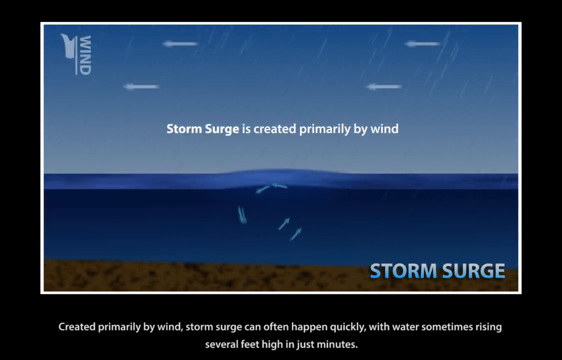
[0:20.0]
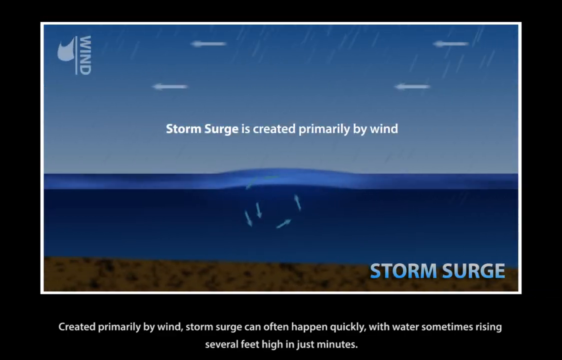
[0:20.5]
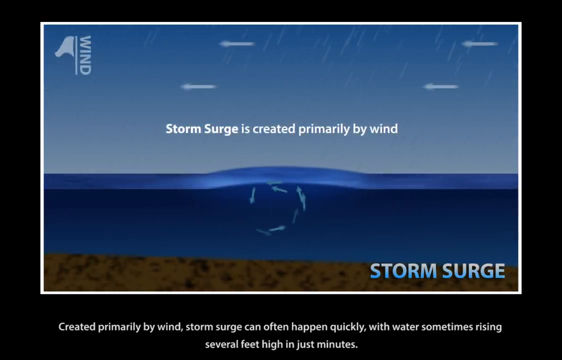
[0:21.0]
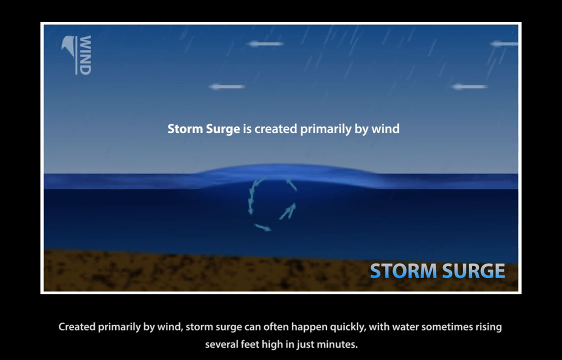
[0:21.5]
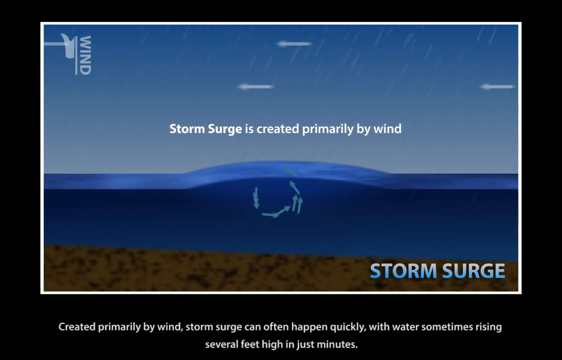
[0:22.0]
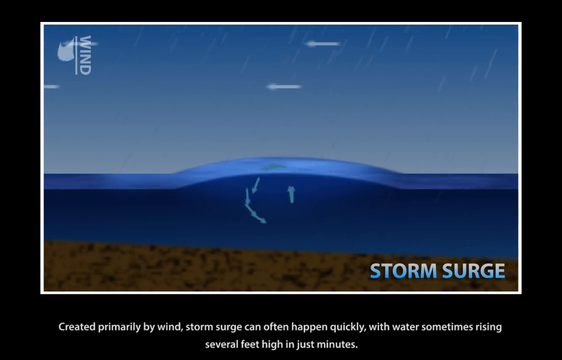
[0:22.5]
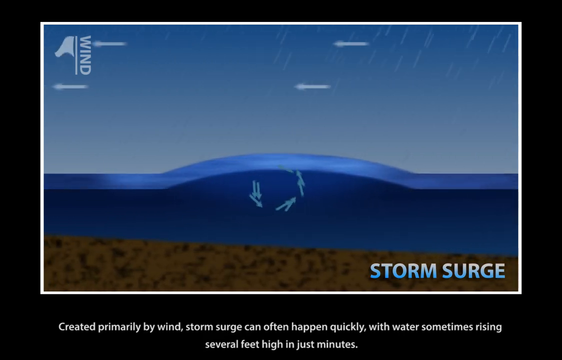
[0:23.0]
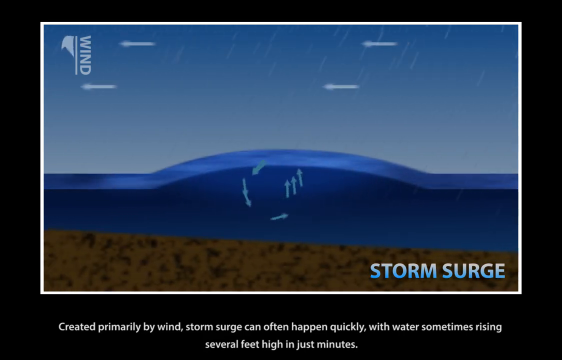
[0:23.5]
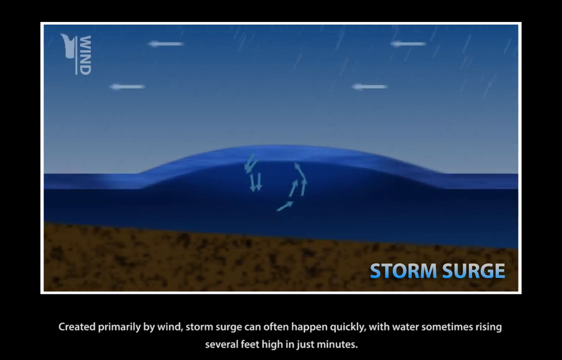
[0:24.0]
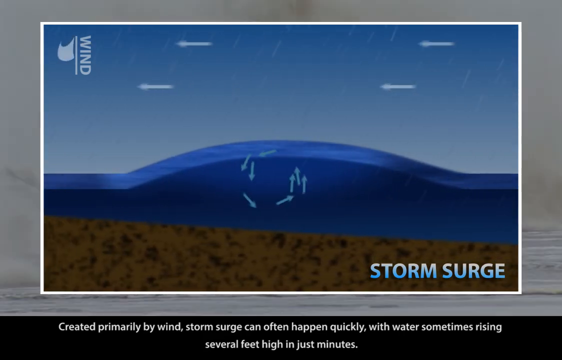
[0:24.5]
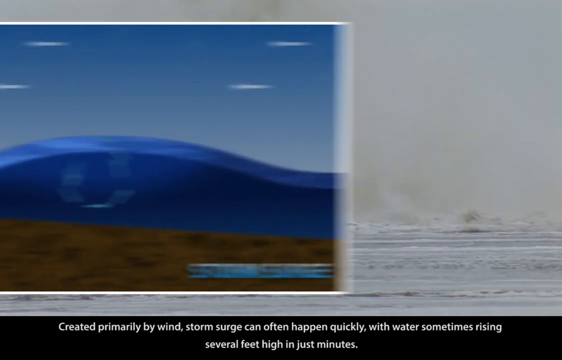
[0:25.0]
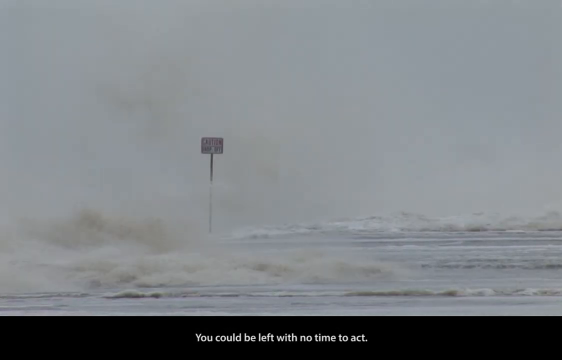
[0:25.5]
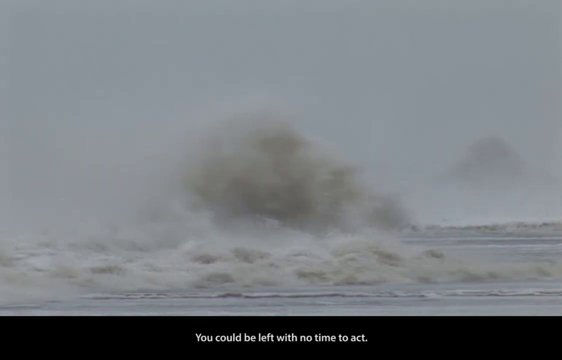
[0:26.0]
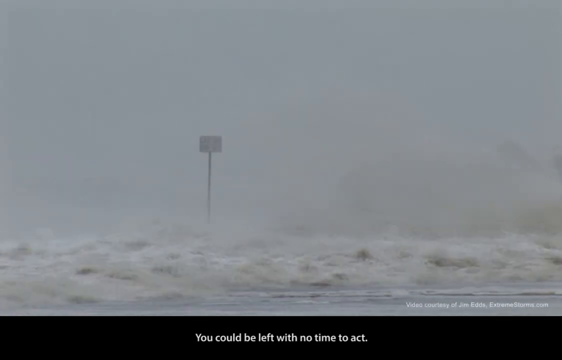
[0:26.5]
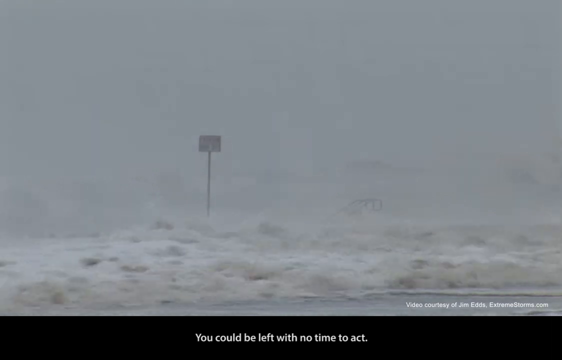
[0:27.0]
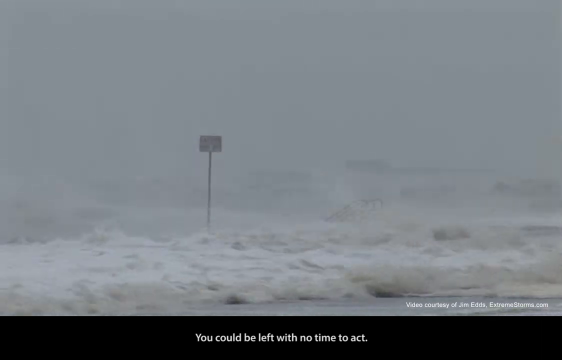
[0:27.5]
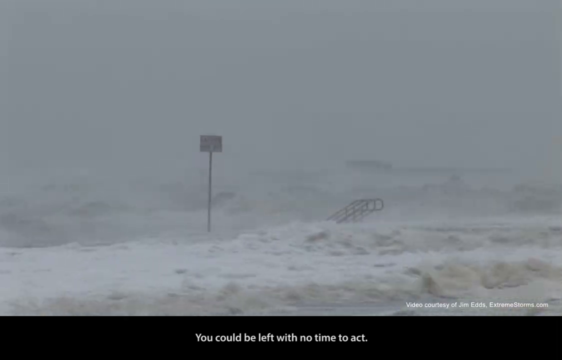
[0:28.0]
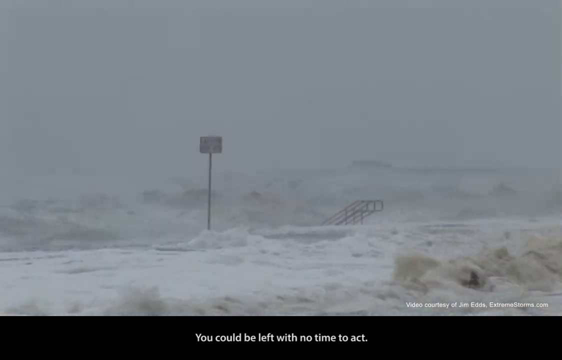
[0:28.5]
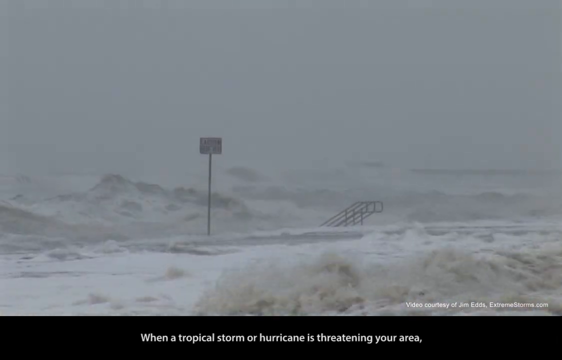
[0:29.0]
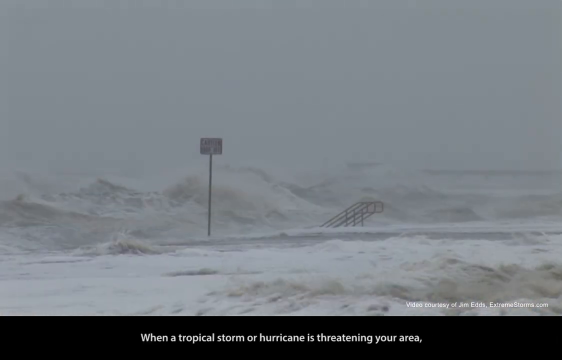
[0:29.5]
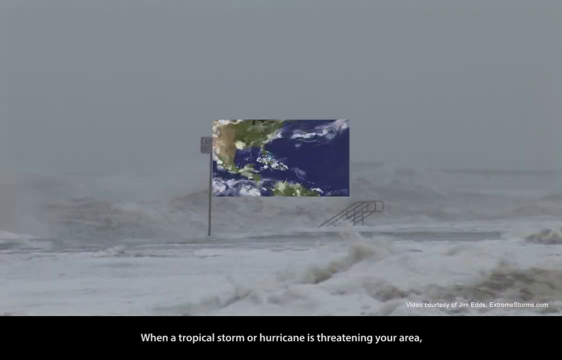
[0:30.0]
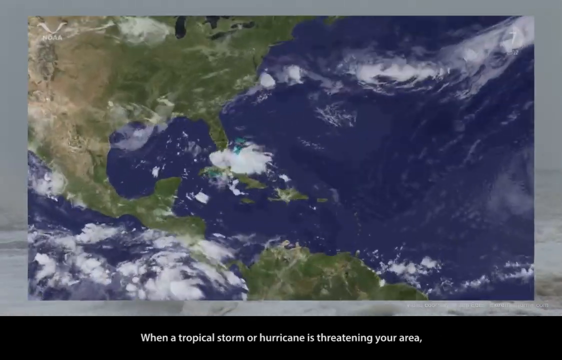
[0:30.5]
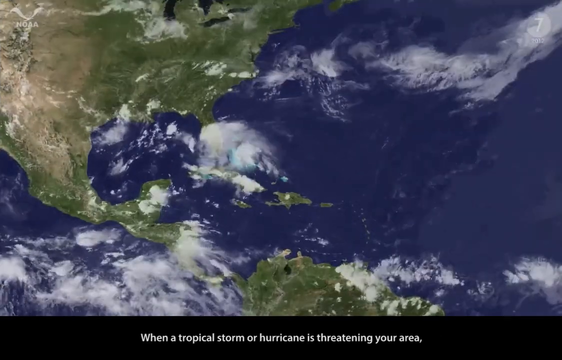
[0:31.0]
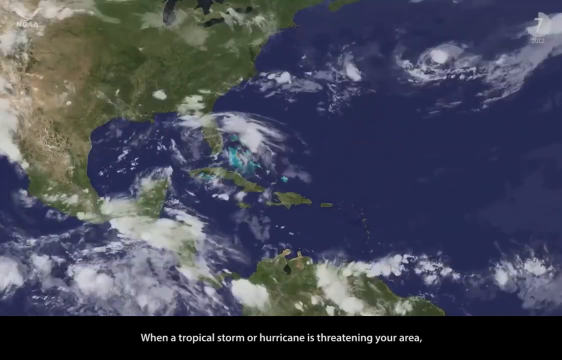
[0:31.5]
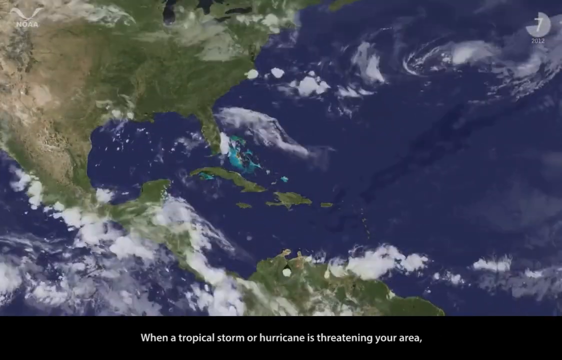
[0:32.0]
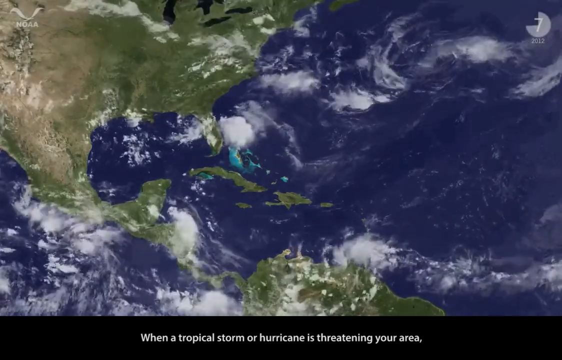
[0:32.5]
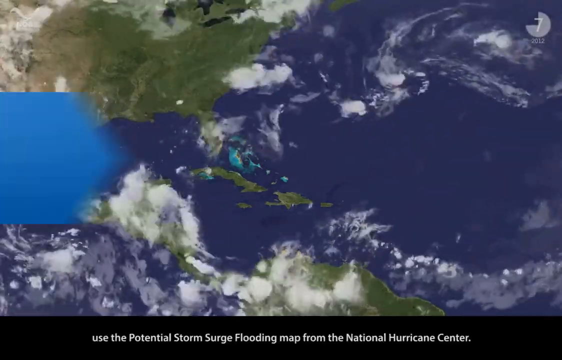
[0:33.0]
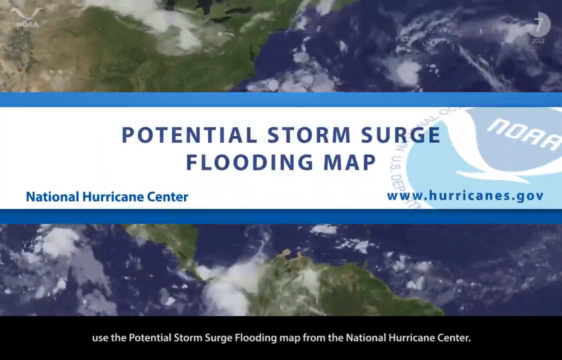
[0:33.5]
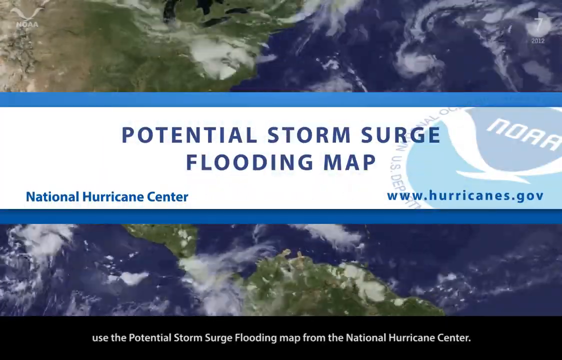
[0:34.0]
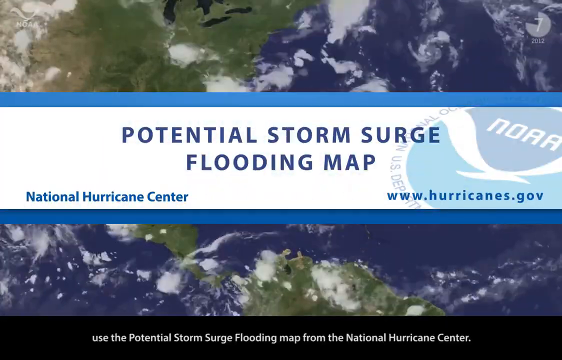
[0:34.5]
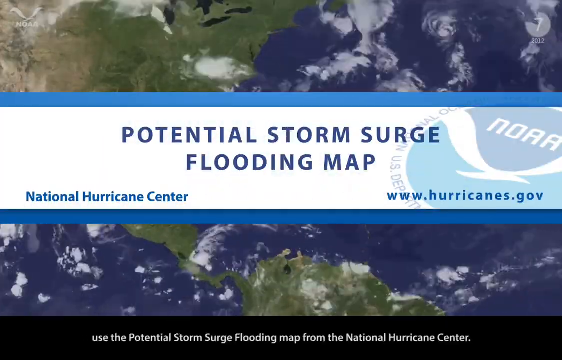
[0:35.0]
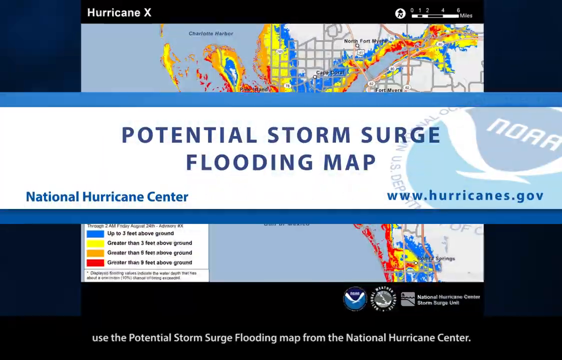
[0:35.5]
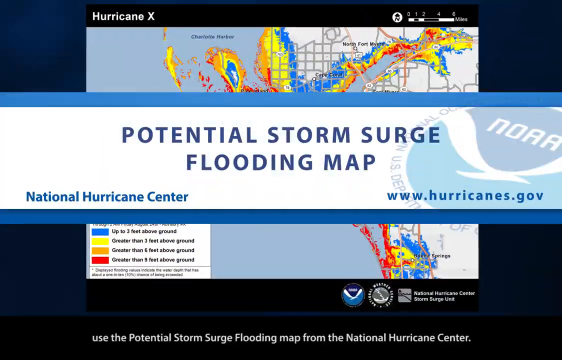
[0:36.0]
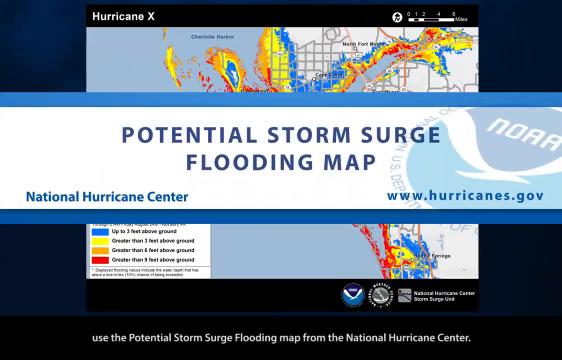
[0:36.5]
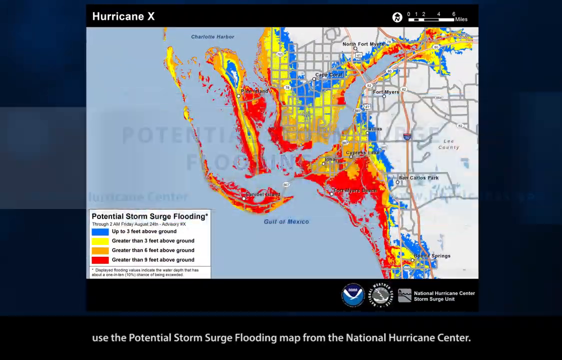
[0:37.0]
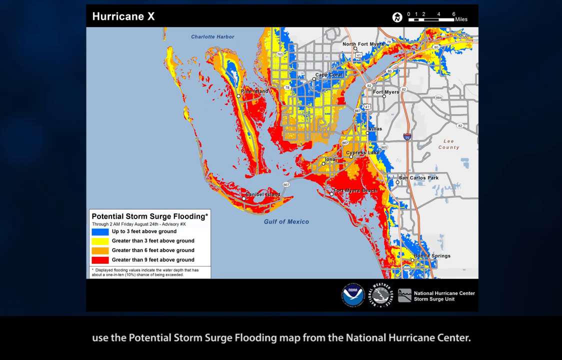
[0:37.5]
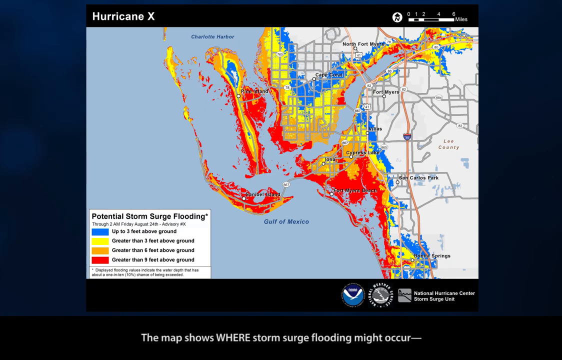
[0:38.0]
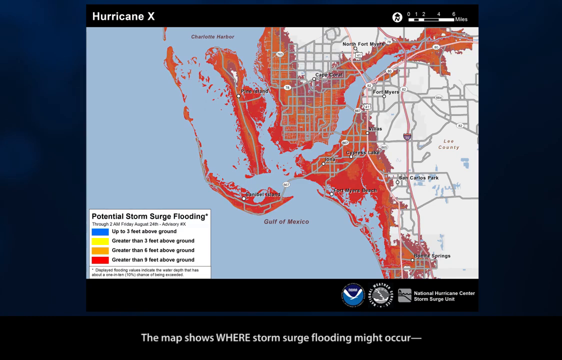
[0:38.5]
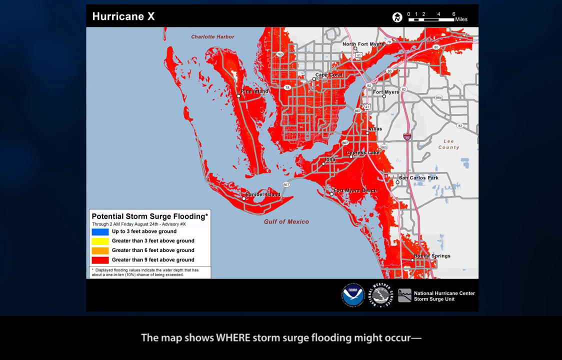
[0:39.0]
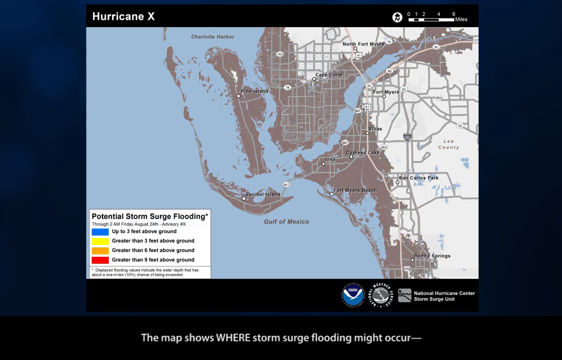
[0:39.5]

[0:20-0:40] A screen has "wind" at the top and "storm surge is created primarily by wind" on a light blue section. A dark blue section is meant to represent water, with "storm surge created primarily by wind" and, in black and white lettering, "Storm surge can often happen quickly with water sometimes rising." A white circle moves toward the left, and little lines at the top also move toward the left. The ocean follows, with water going all over and hitting metal steps and signs. A map then has white moving throughout the whole map. Text reads "potential storm surge flooding map," "National Hurricane Center," "NOAA" and "www.hurricanes.gov." Another map has different colors, including red and orange, with different areas highlighted. The wind and storm surge screen returns, with the lines and circles moving toward the left where it says "wind," and a little flag flapping. High surges follow, with water going really high and coming over a sign. The map then has everything moving toward the right. A potential storm surge flooding legend shows four colors for flood areas: blue is up to three feet above ground, yellow is greater than three feet, orange is greater than five feet, and red is greater than nine feet above ground. Different parts of the map appear in these colors.